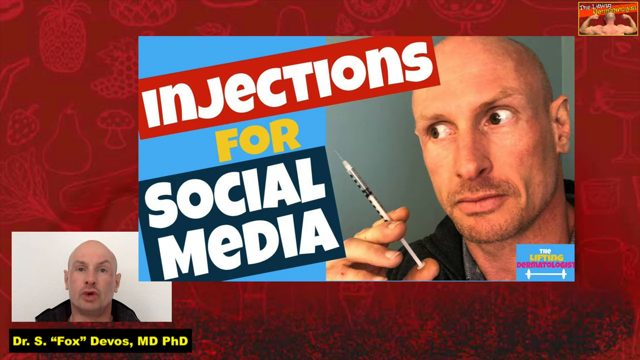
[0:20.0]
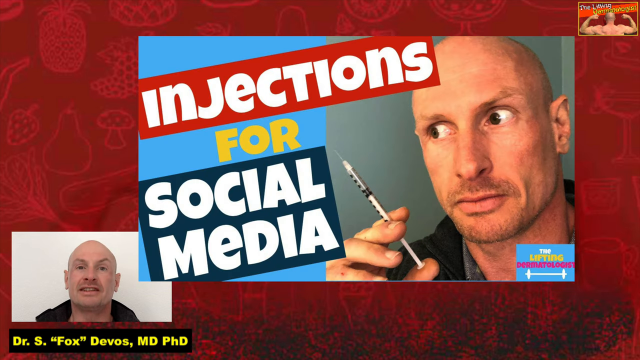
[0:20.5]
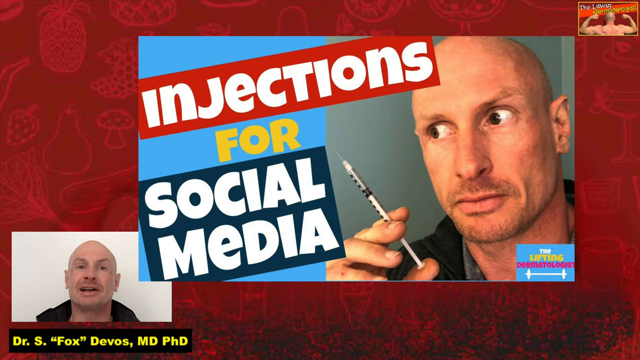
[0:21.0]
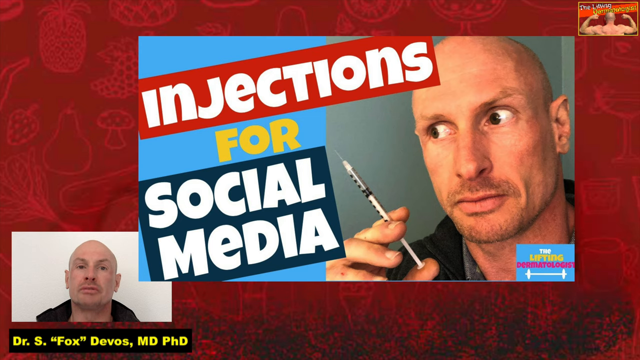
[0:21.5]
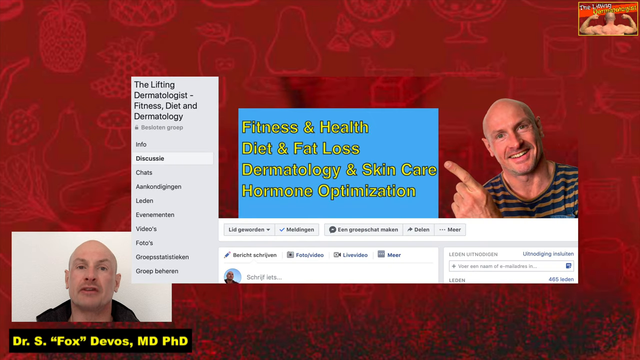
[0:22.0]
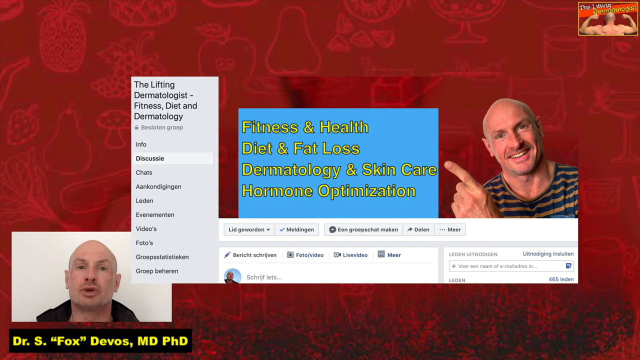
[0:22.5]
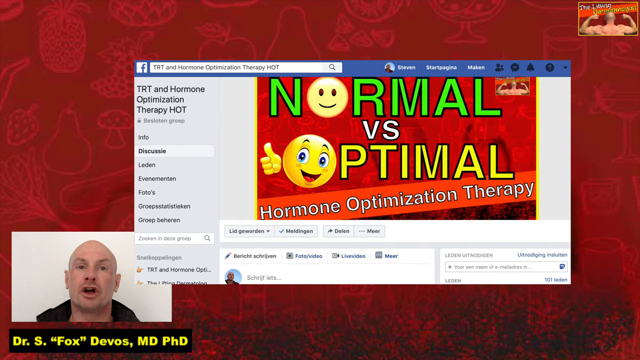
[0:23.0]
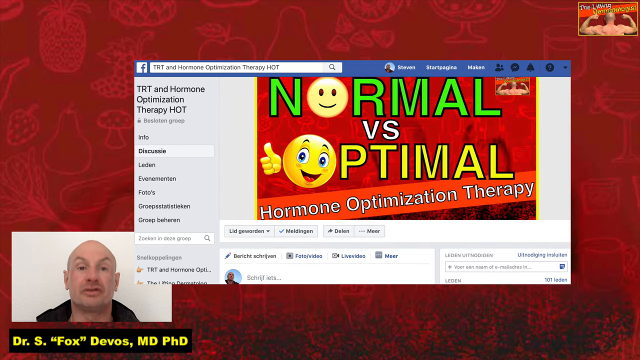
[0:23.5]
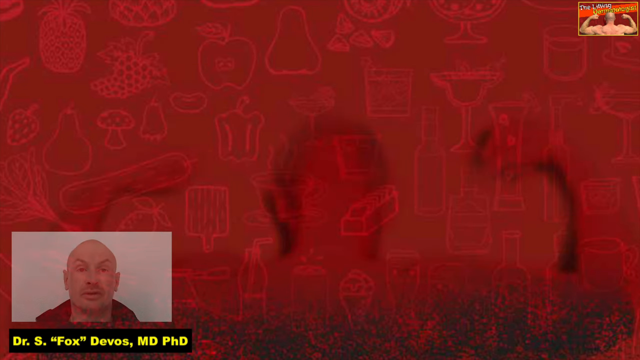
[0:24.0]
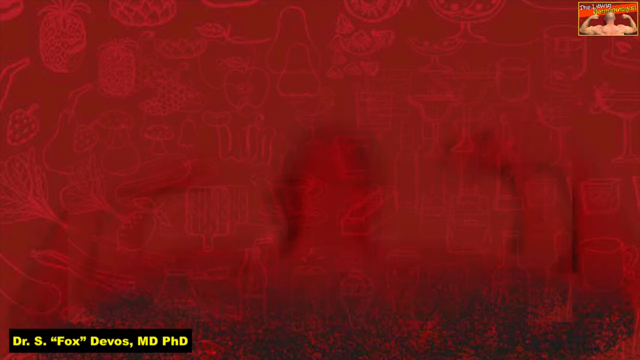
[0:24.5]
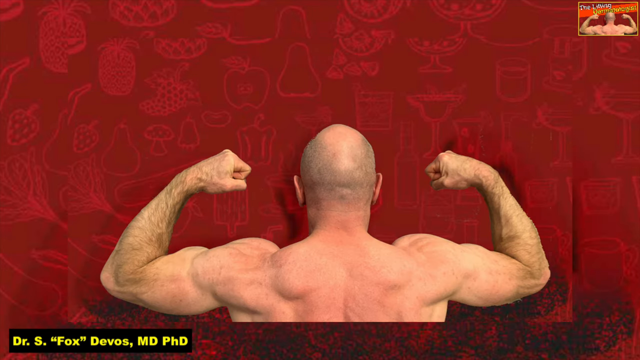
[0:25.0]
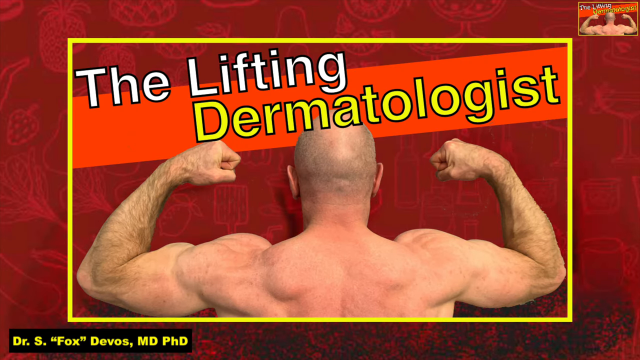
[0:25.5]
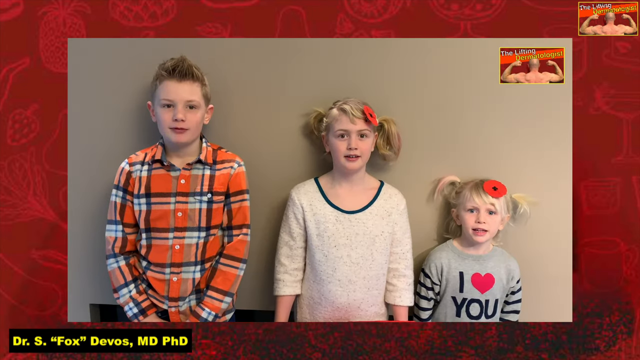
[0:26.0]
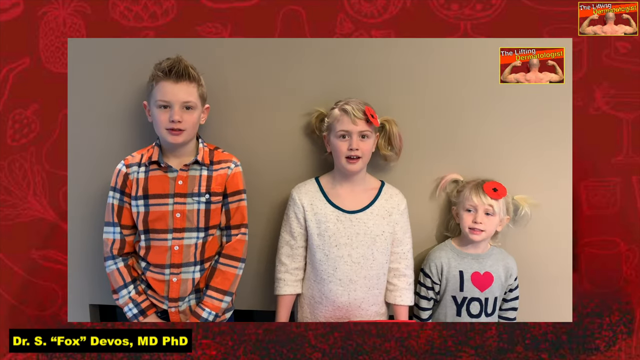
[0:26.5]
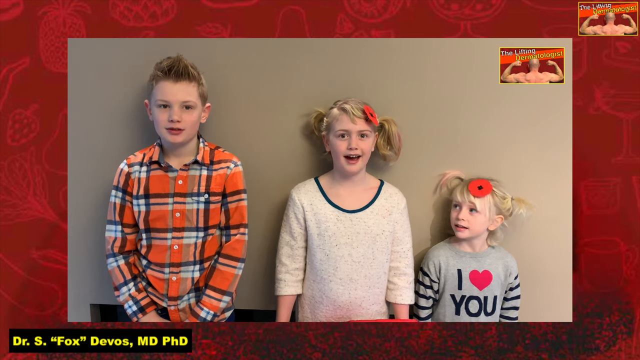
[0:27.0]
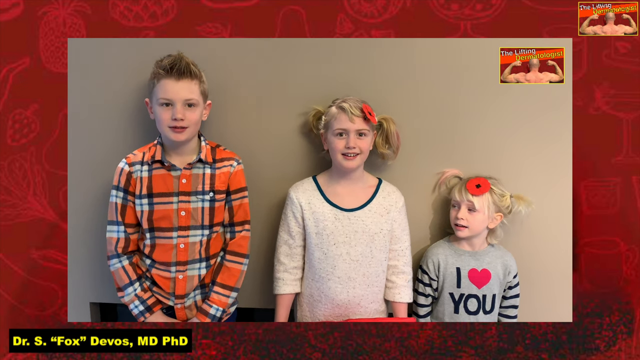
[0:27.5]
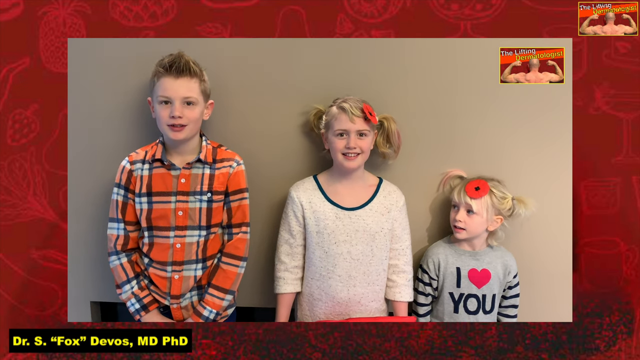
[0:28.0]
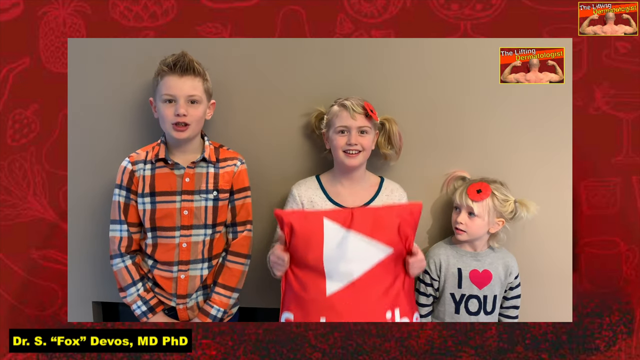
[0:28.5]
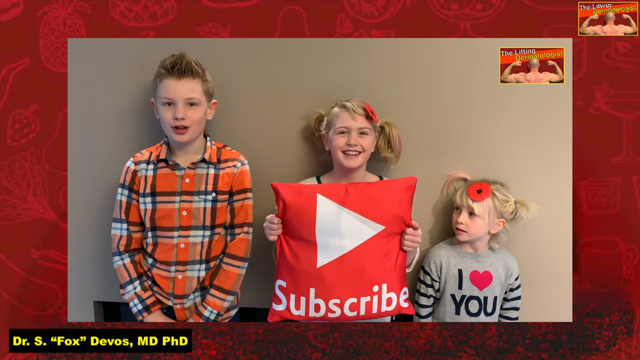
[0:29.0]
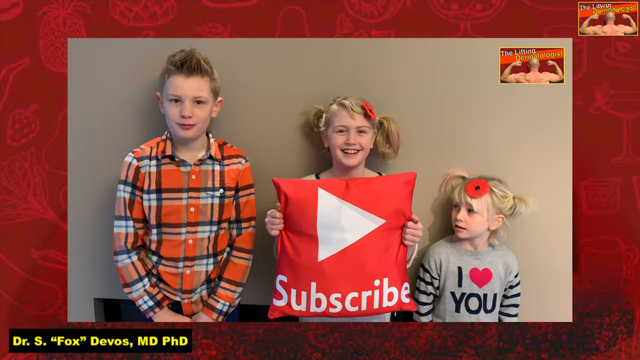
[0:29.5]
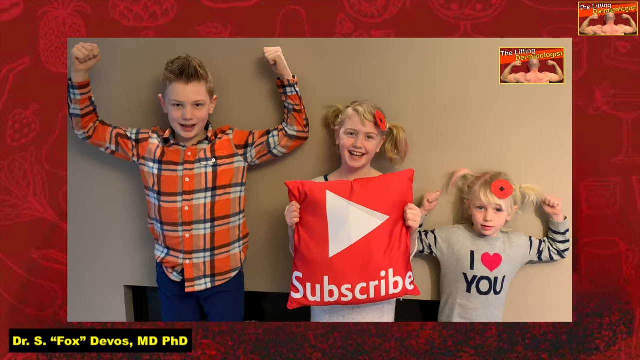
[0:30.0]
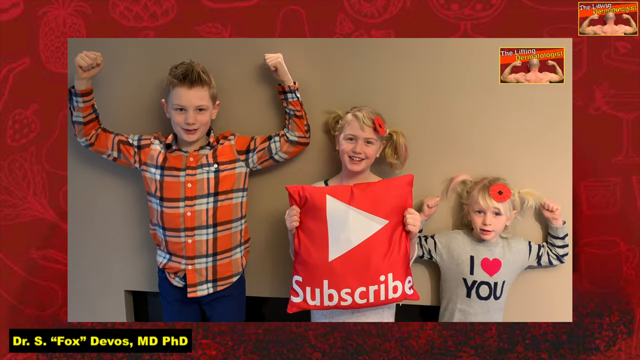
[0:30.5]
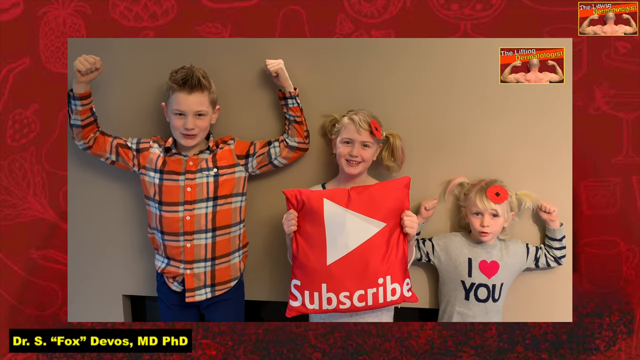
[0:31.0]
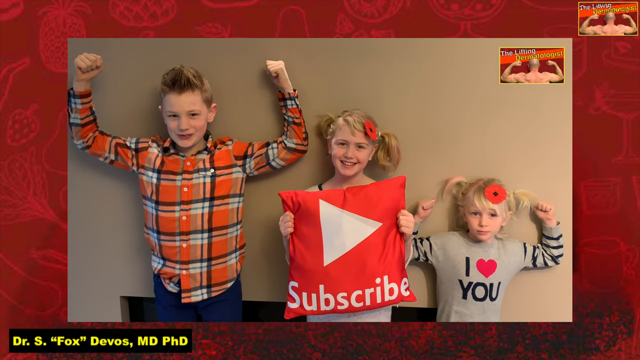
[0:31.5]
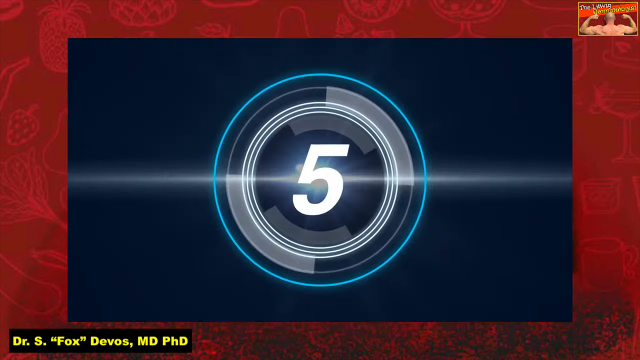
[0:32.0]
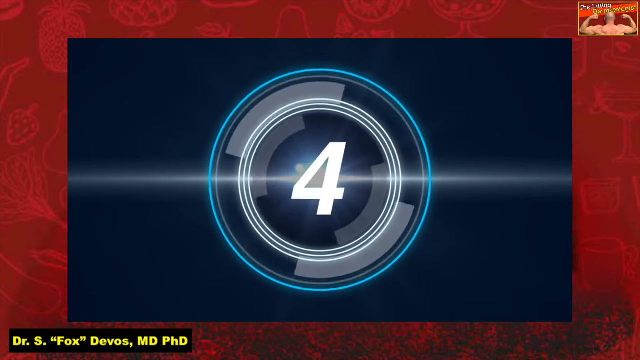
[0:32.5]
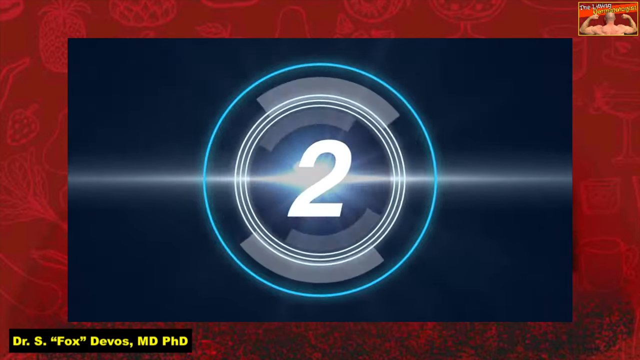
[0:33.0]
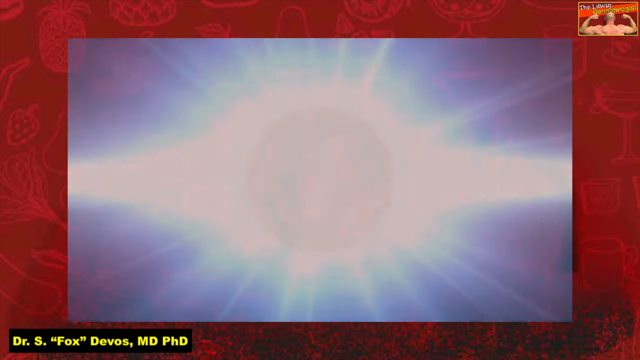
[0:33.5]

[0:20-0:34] A man stands in close-up so only his shoulders and face are visible. His head is tilted to his right and his eyes look to the right. In his hand, held up slightly in front of him, he holds a syringe; his fingers and thumb are apart, the base of the syringe rests against his thumb, and the syringe goes straight up between his index and middle fingers. The video cuts to the man in close-up with his hand in front of him, pointing with his index finger straight and the other three fingers curled forward; his thumb cannot be seen. He points at text that reads "fitness and health, diet and fat loss, dermatology and skin care, hormone optimisation". Next is an image of a bald man seen from behind, his arms held out perpendicular to his shoulders, bent at the elbows, with his hands clenched in fists. The video finishes with an image of three children: the child on the left is the tallest, the middle child the second tallest and the child on the right the shortest. They move and seem to be talking. The child on the right has what looks like a poppy, a red circle, on her head, and the middle child has one on the left side of her head. The middle child holds up a pillow with the text "subscribe" on it, while the two children on either side hold their arms up, bend them at the elbows and clench their fists in the air.